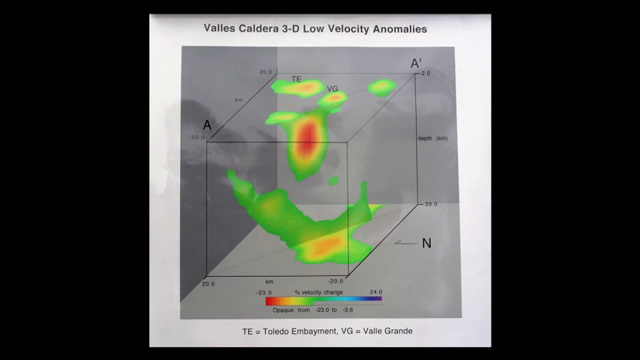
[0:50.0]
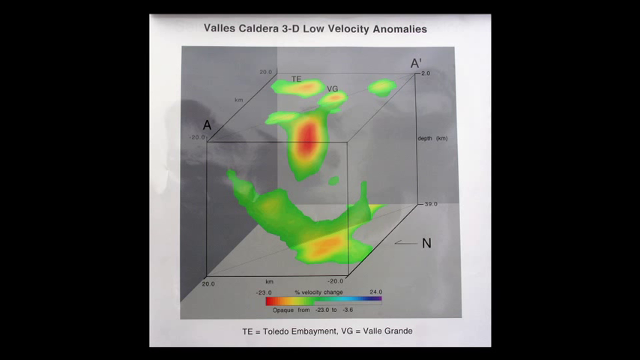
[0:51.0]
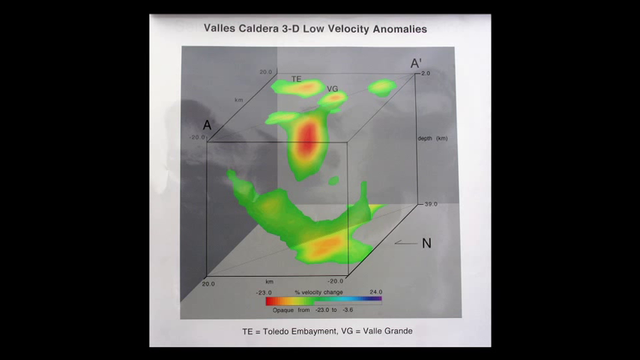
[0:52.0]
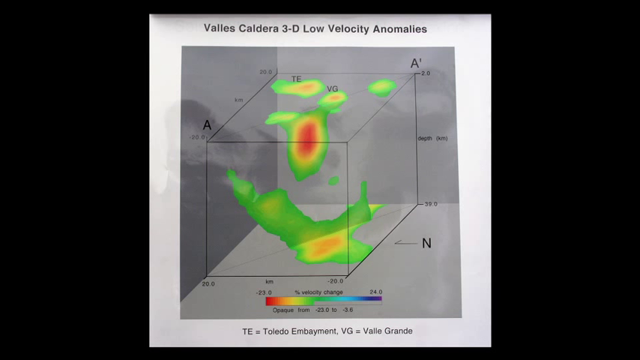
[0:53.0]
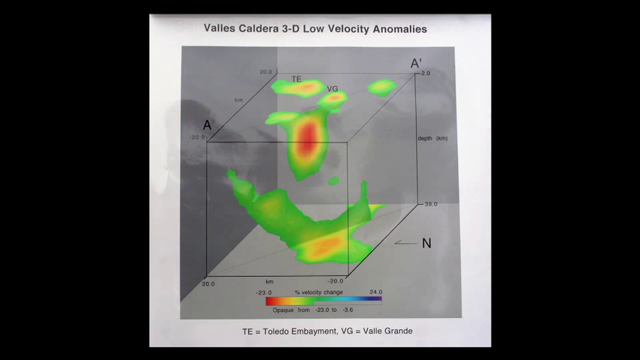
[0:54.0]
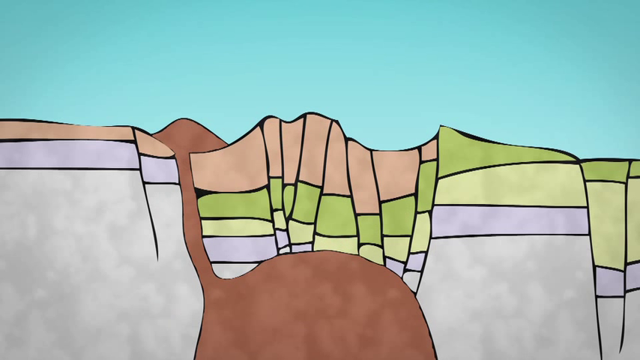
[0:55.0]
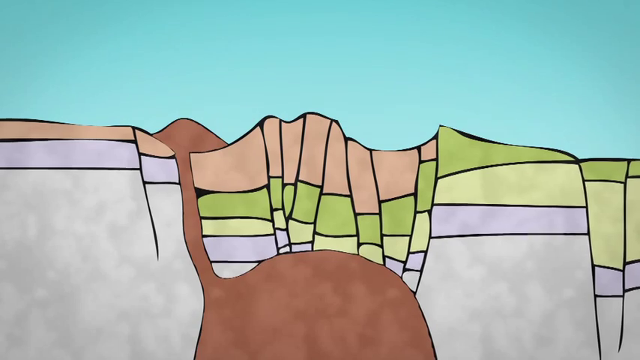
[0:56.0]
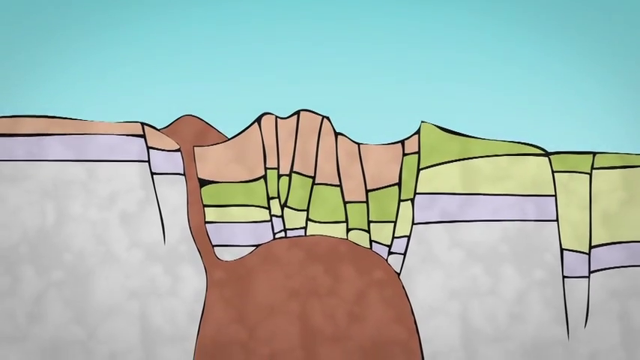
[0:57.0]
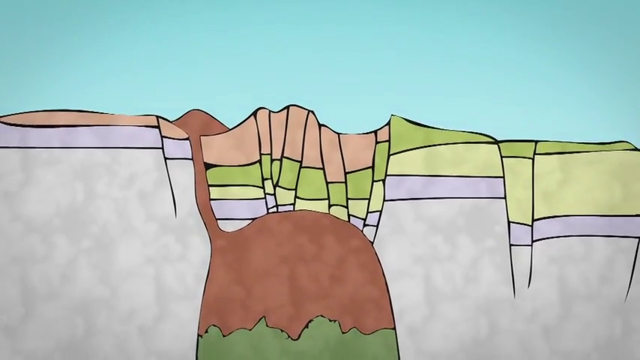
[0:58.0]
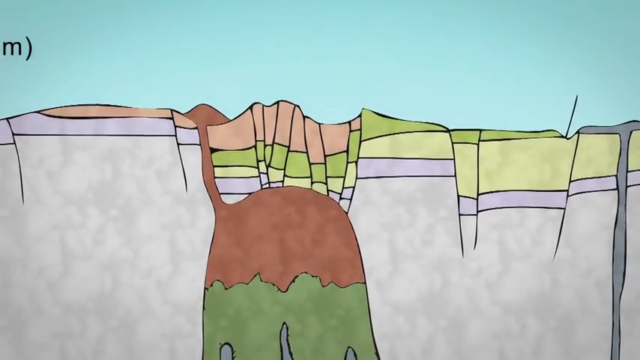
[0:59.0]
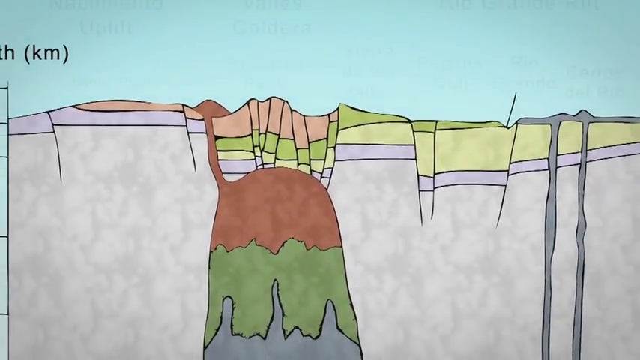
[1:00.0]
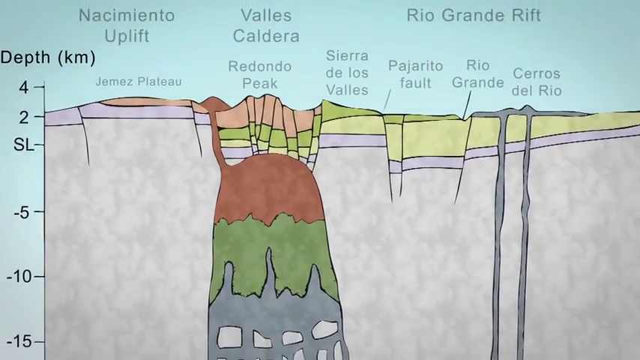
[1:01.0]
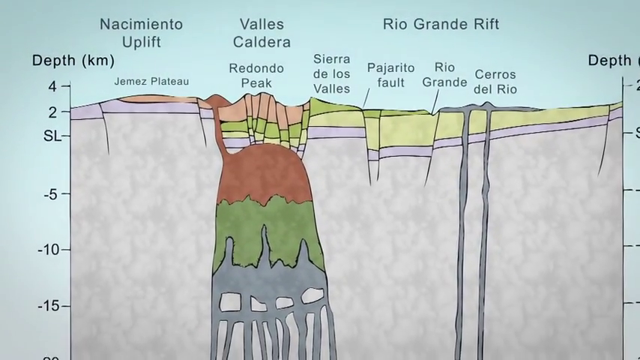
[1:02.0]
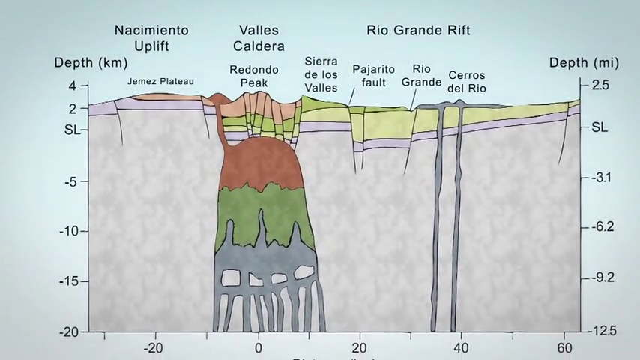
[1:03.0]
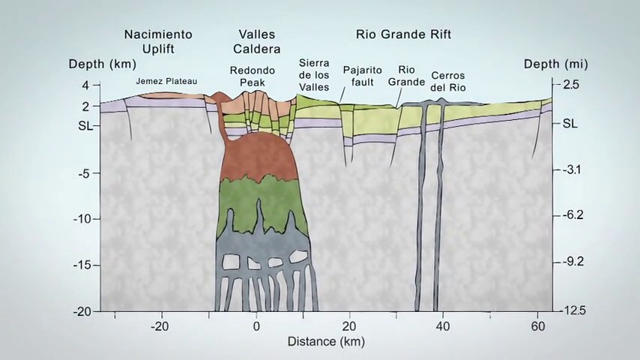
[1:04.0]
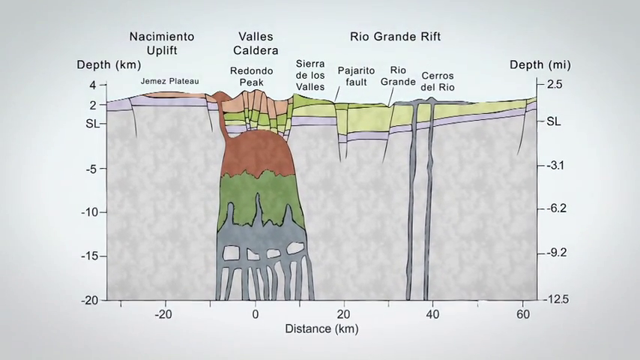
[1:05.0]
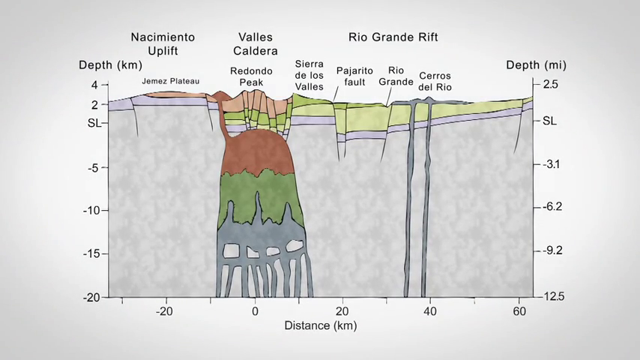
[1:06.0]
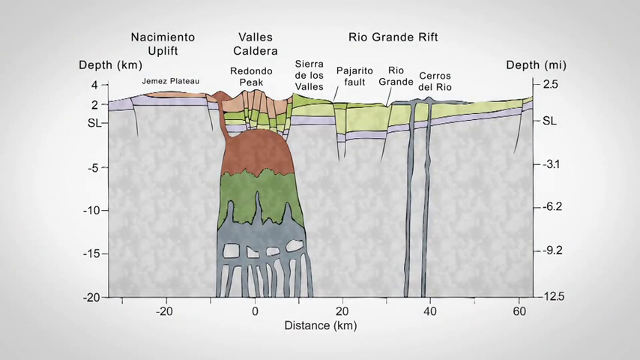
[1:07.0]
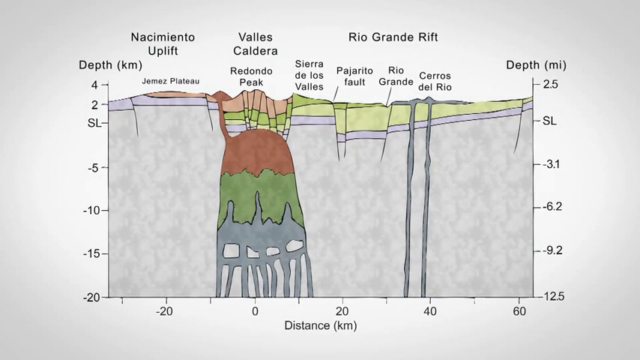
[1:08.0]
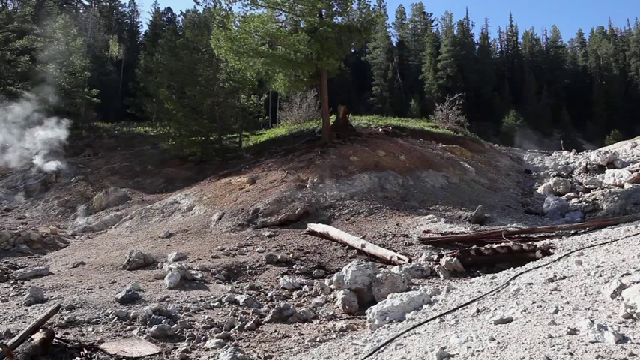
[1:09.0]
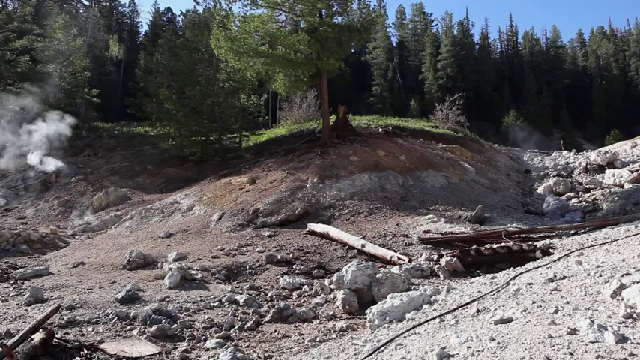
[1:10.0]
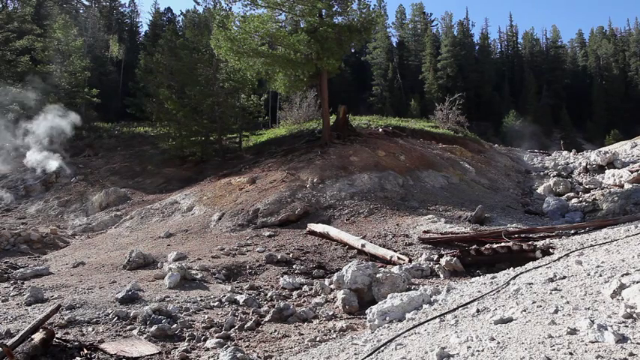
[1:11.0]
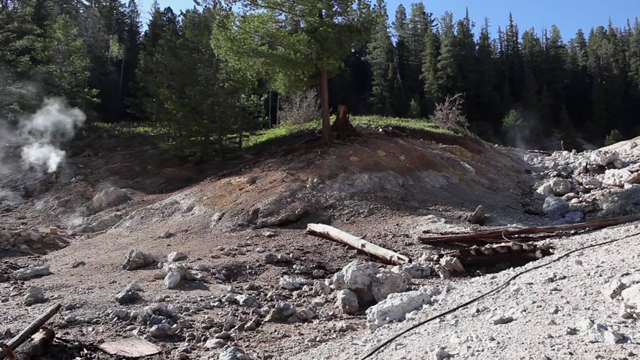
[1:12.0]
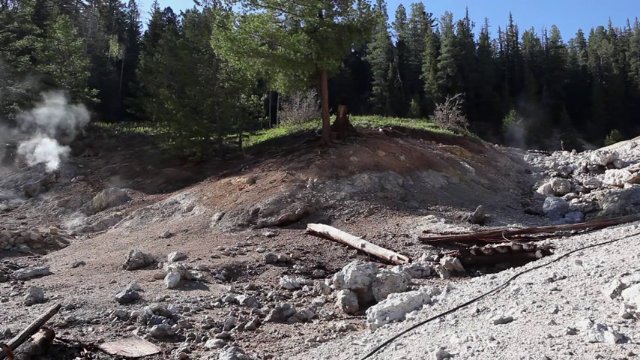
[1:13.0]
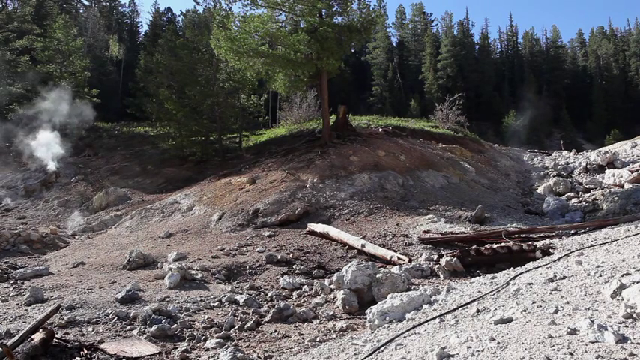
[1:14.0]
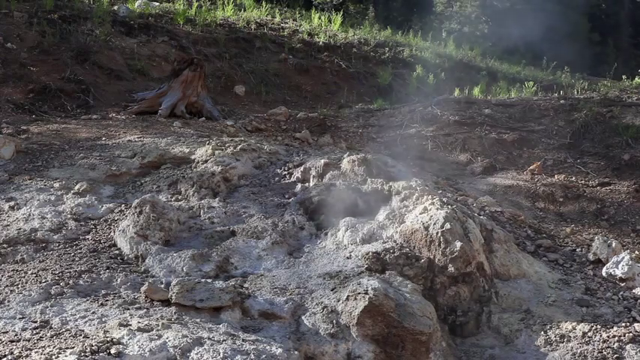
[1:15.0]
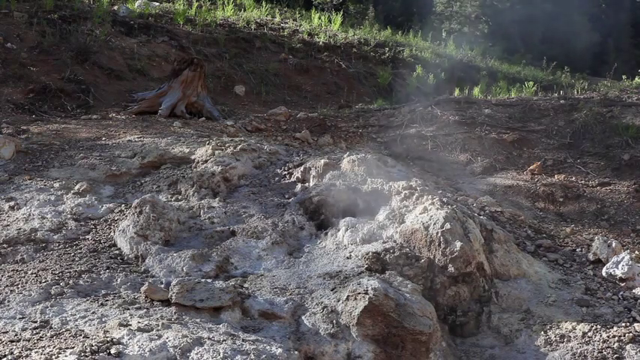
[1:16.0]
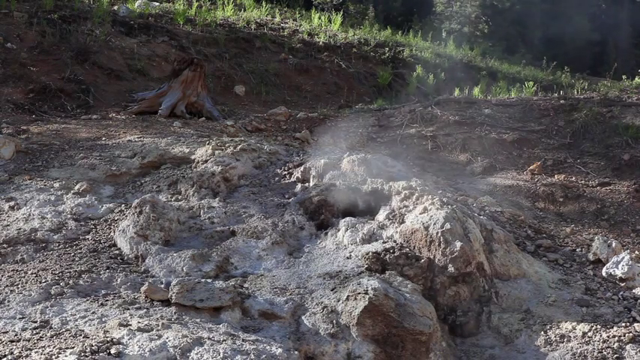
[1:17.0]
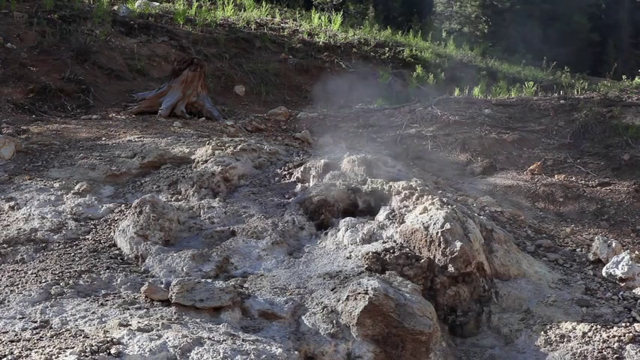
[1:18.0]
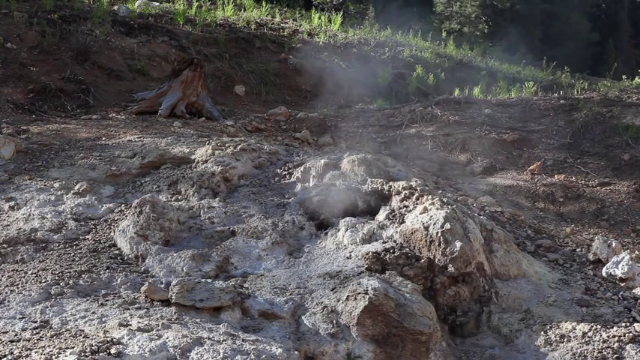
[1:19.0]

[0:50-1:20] The shot reads "Valles Caldera 3D low velocity anomalies" and shows a square, a 3D cube with spots of color inside in green, yellow and red, displaying the velocity change in different colors. Each corner has the letter A on it, along with different lettering. It cuts to an animation that is not actually 3D, just a picture showing a graph labeled "Nasimiento uplift Valles Caldera Rio Grande rift", with the different breaks in the ground shown on the diagram. It then cuts to a video of a forest area with rocks on the ground and steam coming up from holes in the ground; there are many trees, grass and bushes around the rocky ground.